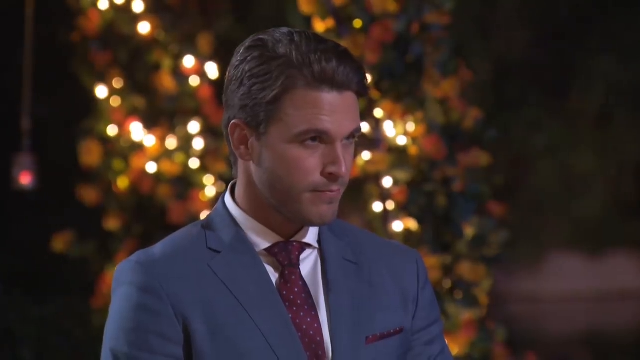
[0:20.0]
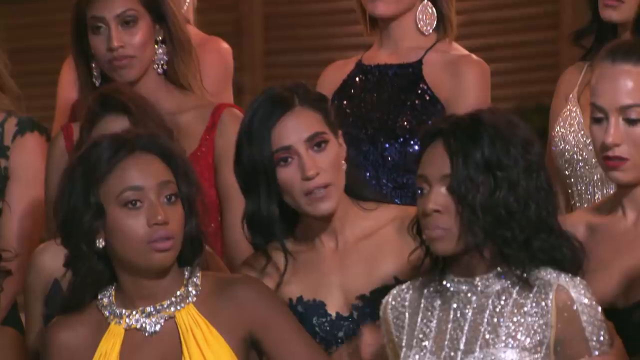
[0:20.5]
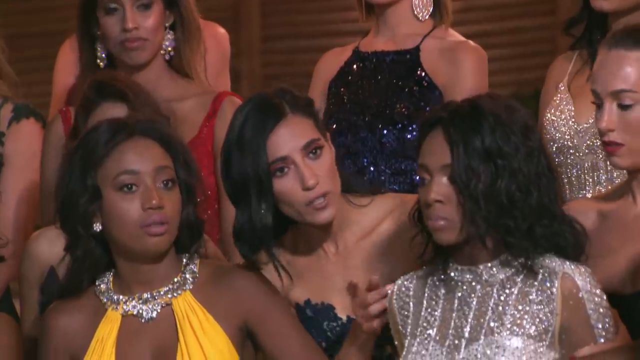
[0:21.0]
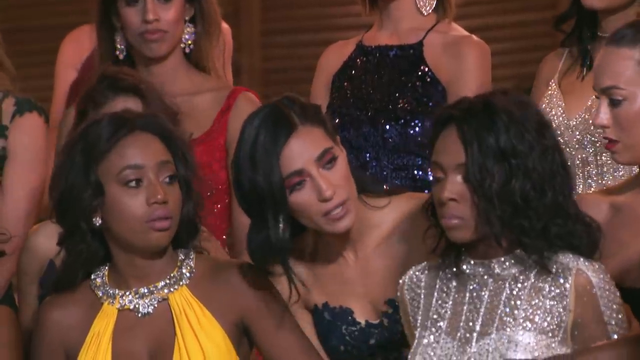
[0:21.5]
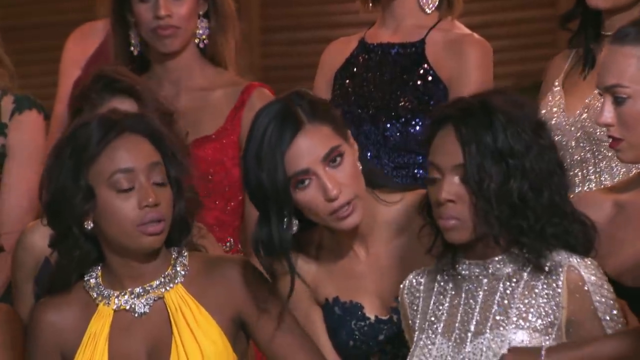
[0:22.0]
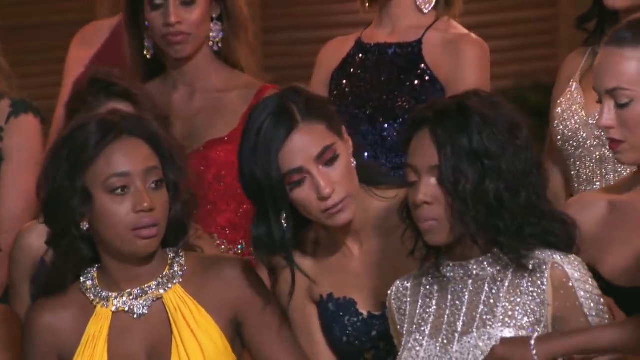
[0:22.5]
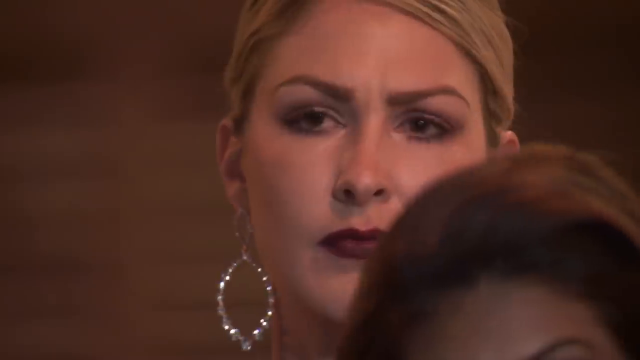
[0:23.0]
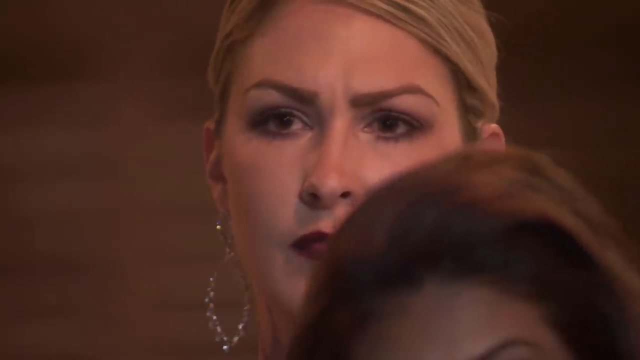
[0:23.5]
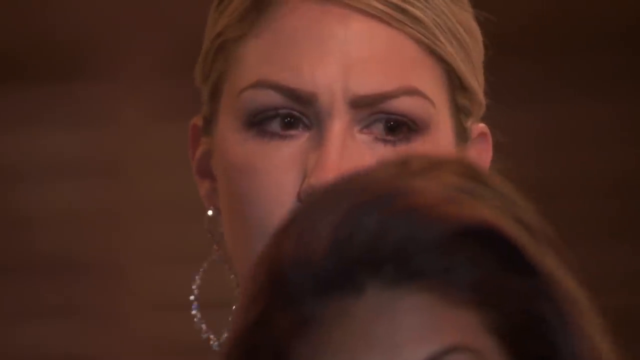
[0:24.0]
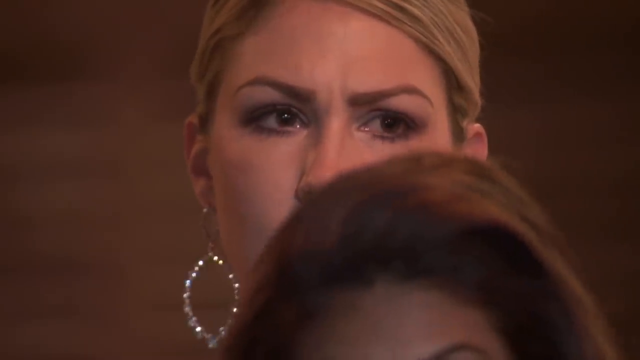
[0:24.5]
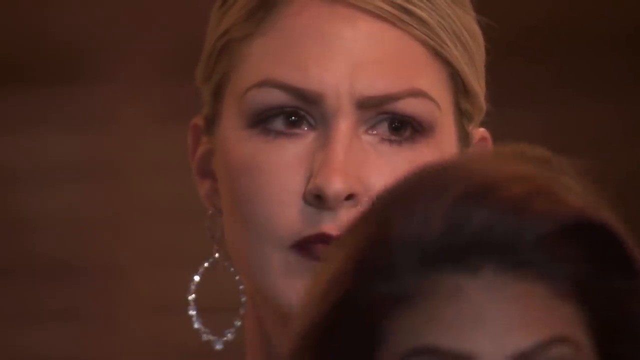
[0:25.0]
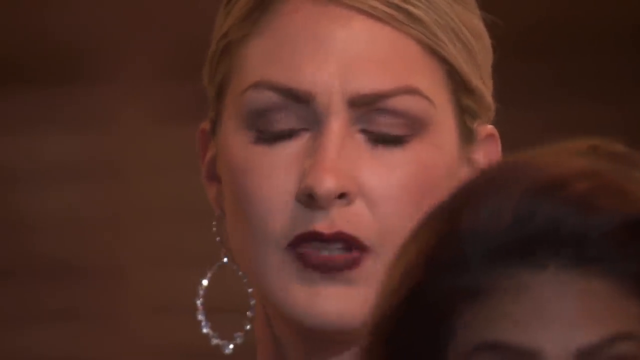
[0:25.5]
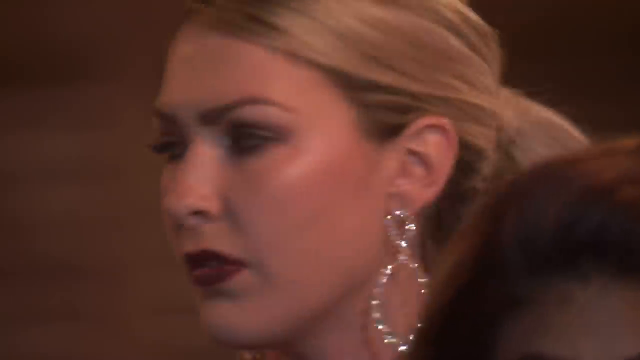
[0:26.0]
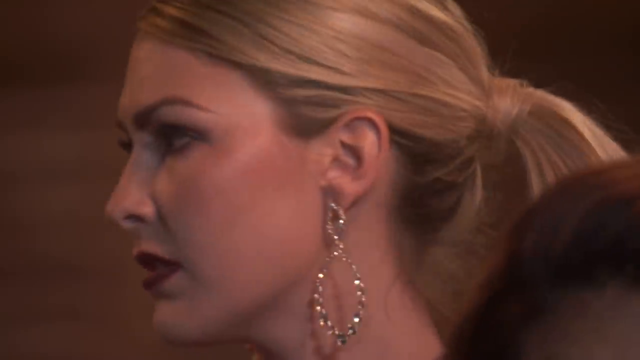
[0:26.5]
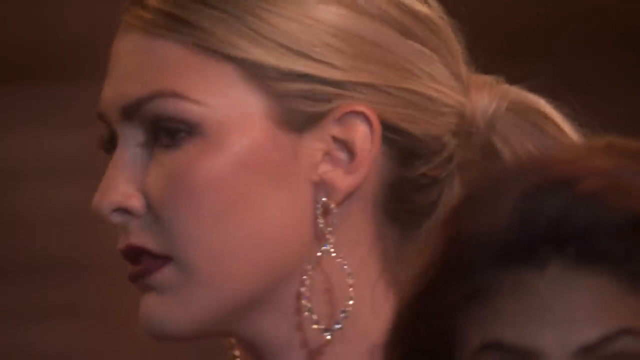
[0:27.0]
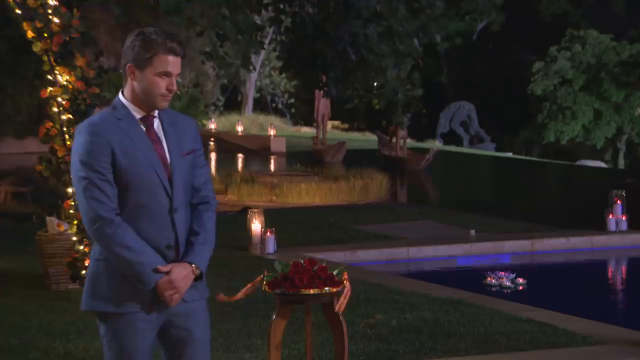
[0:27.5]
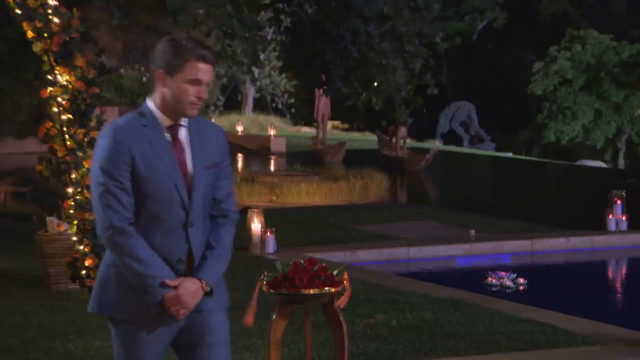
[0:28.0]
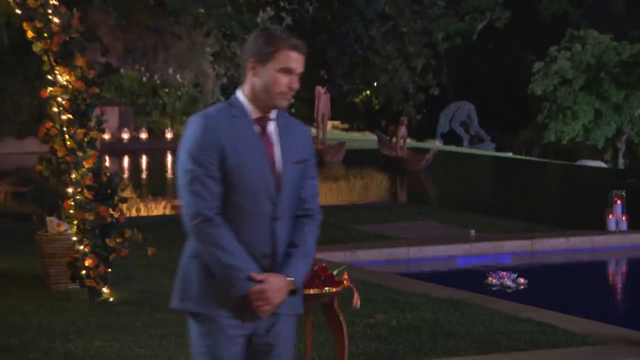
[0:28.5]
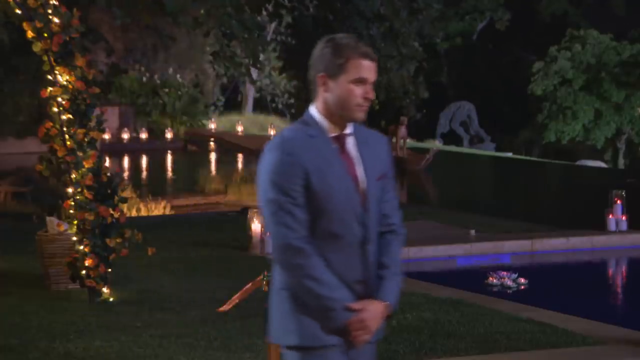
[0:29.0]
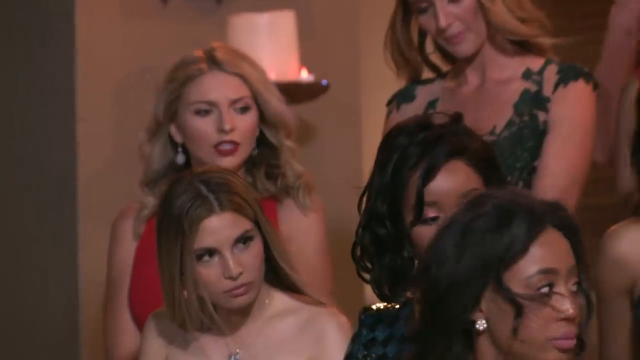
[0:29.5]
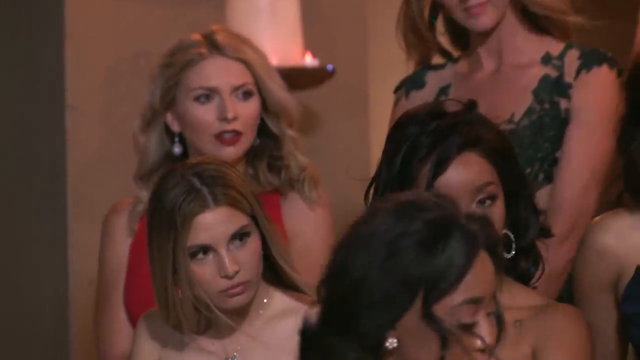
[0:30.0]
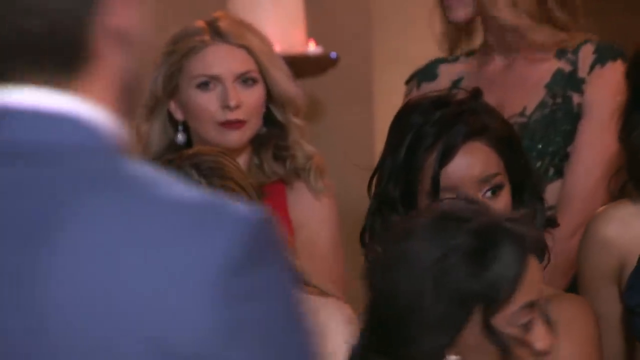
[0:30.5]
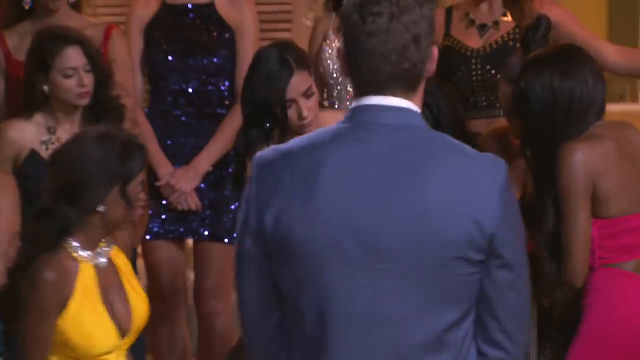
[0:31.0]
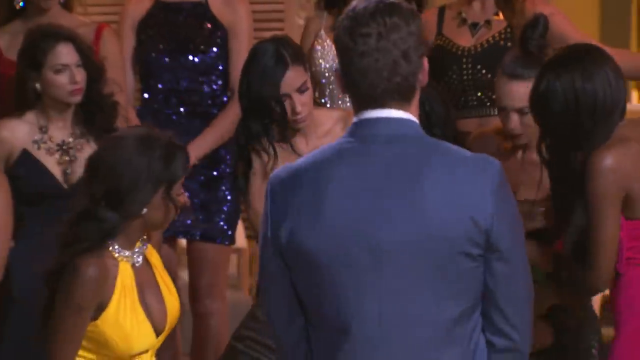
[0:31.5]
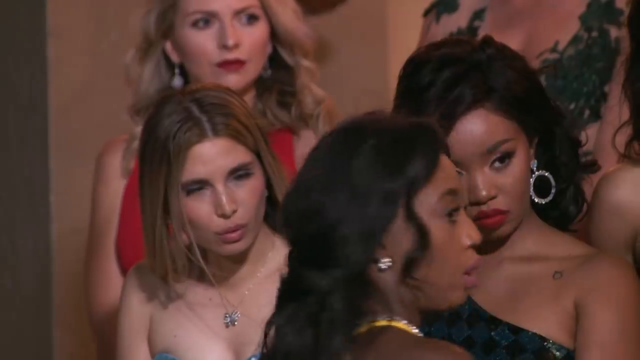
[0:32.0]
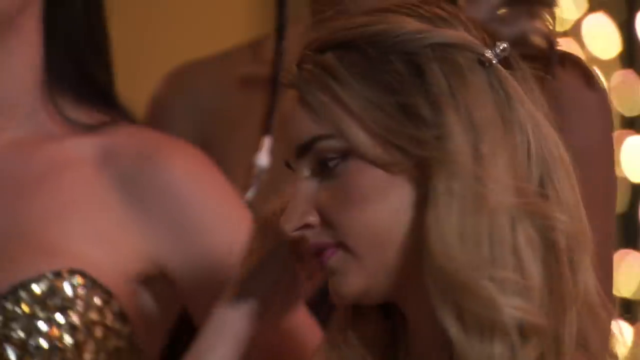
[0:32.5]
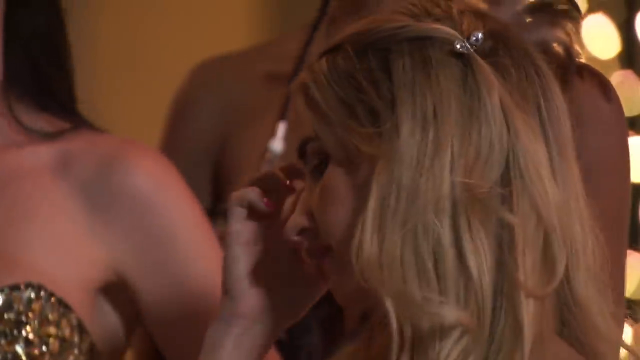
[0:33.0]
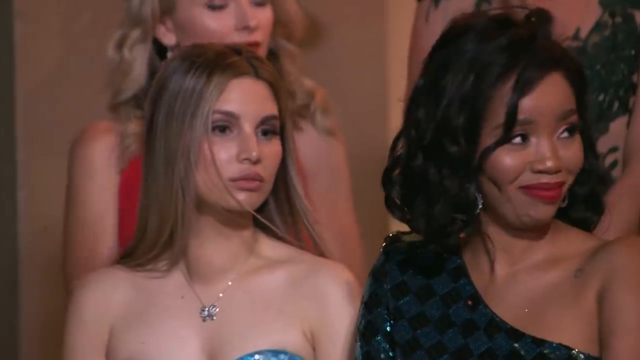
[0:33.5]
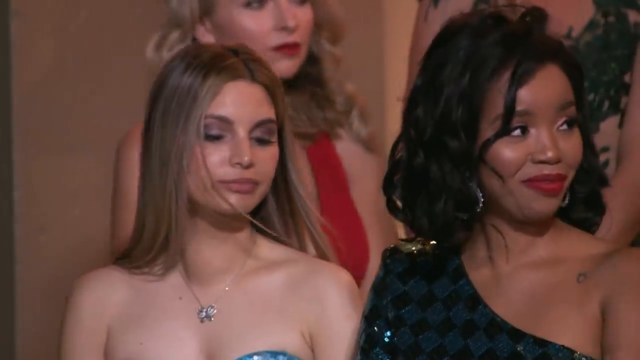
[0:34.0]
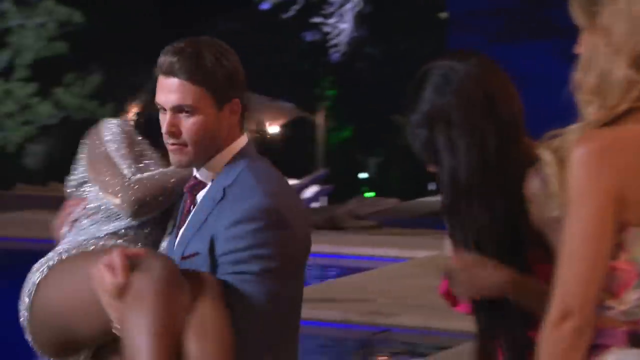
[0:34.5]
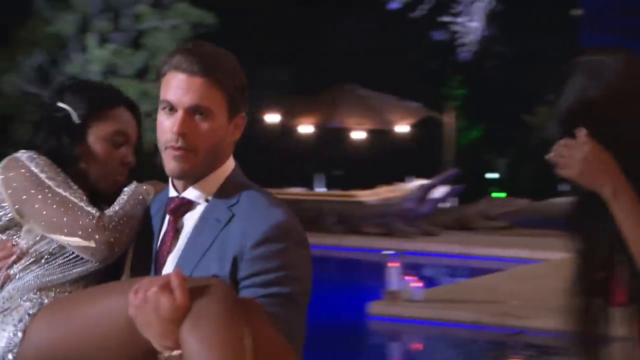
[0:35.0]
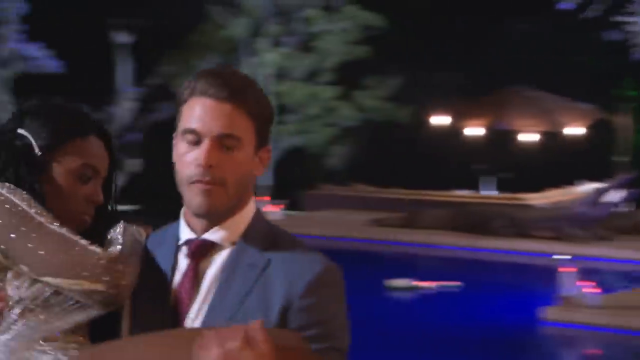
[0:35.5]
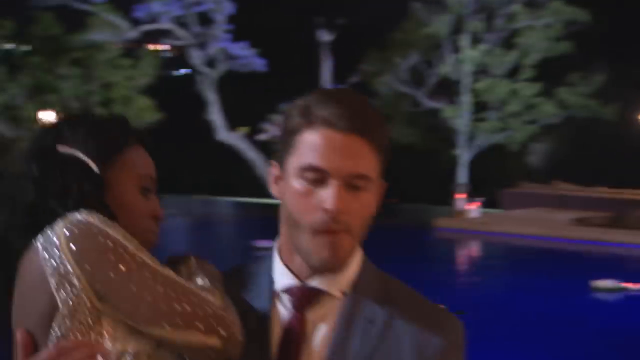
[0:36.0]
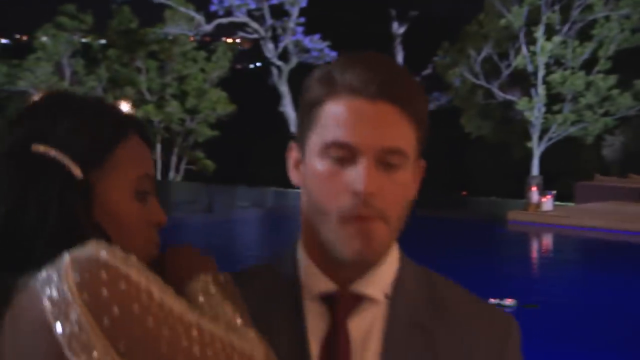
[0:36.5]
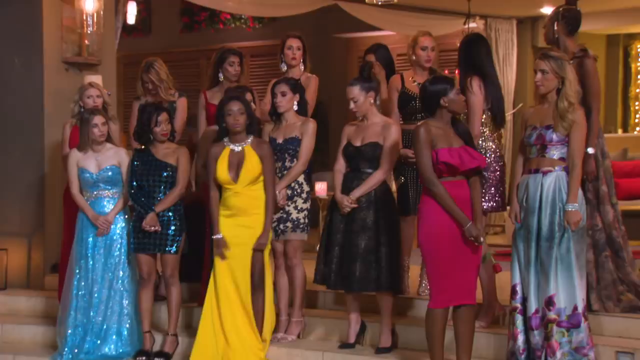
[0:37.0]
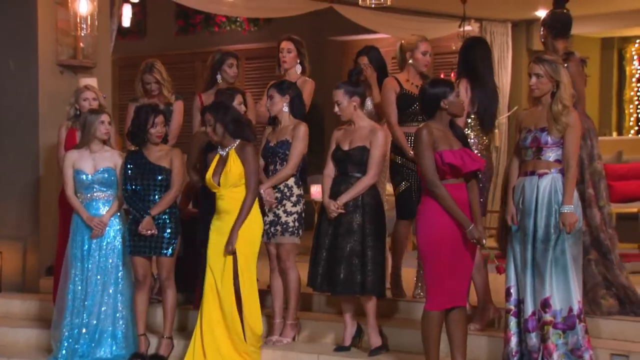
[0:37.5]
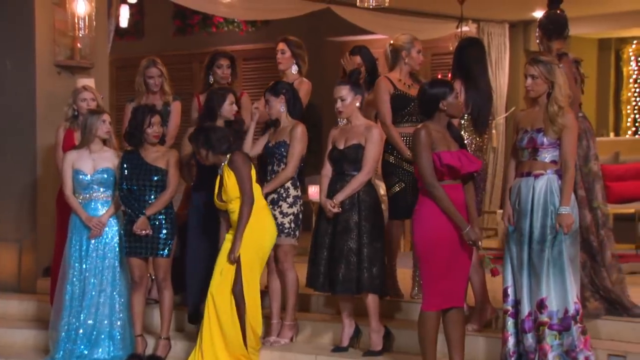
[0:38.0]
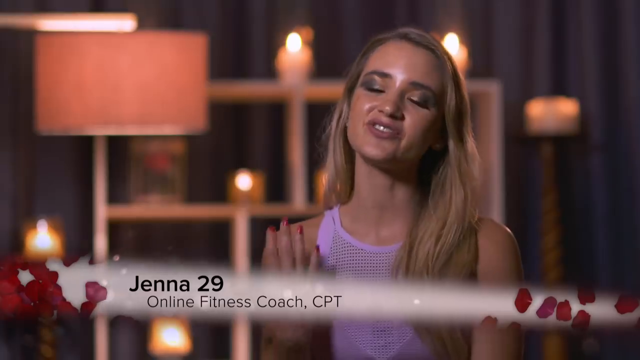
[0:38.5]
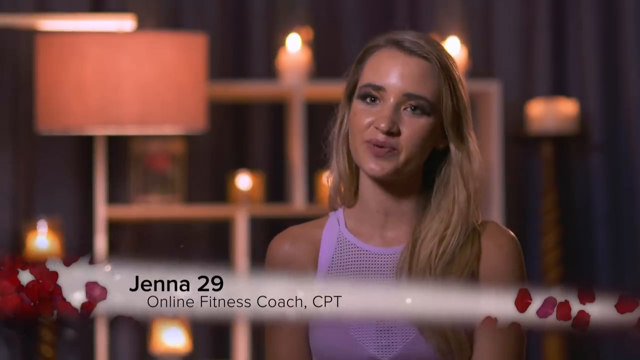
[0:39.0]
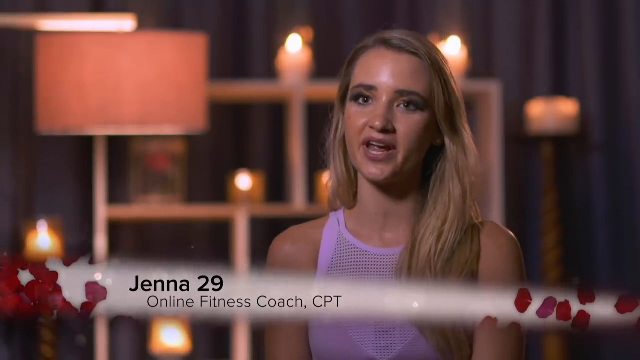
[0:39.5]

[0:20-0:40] In a very darkly lit room, an audience of women in formal dresses look very nervous as the camera zooms into their faces. In front of them is a host: a white man in a silver suit, a dark maroon tie and a white shirt, with short black hair, who looks about 45 years old. Behind him are many colorful, dimly lit lights. The scene quickly changes to focus on a very nervous-looking black woman with curly hair down to her shoulders, wearing a silver dress with bright diamantes on it. Her fellow audience members try to console her as she shakes. The camera quickly zooms in on a white woman with blonde hair who looks rather shocked and surprised at the nervous young black woman. The camera shifts slightly and returns to the host, who moves forward towards the women.